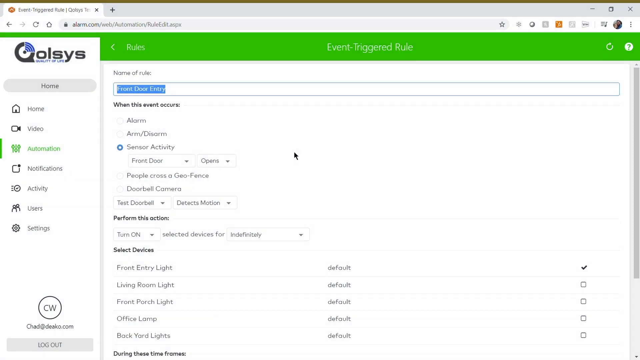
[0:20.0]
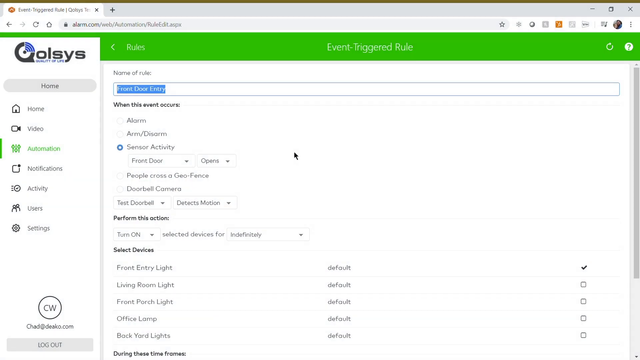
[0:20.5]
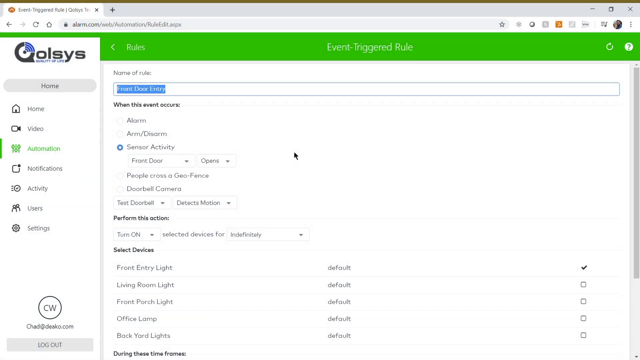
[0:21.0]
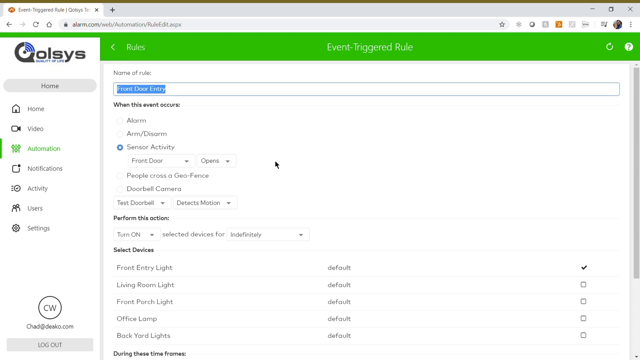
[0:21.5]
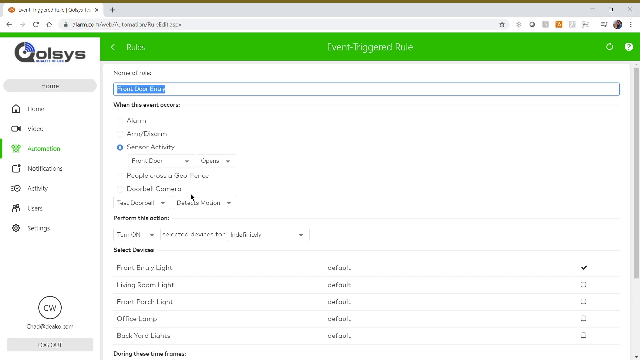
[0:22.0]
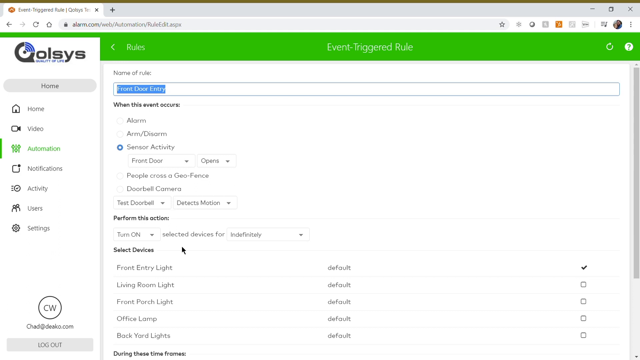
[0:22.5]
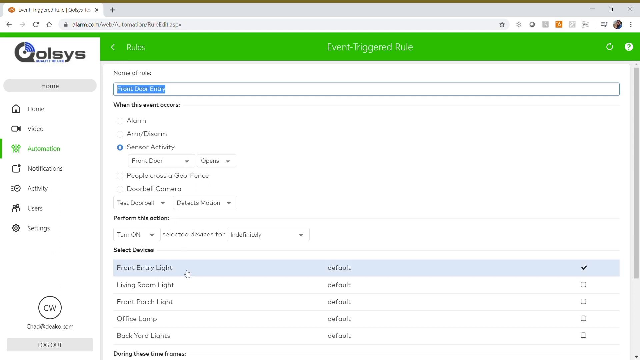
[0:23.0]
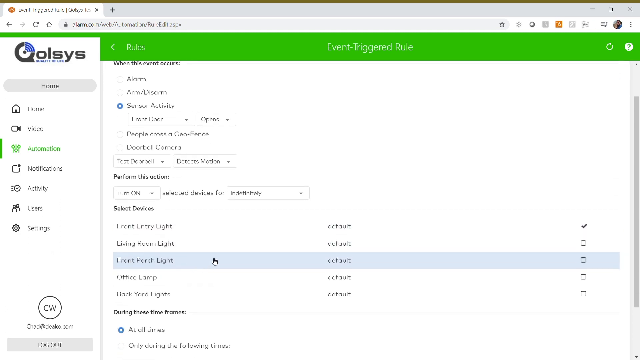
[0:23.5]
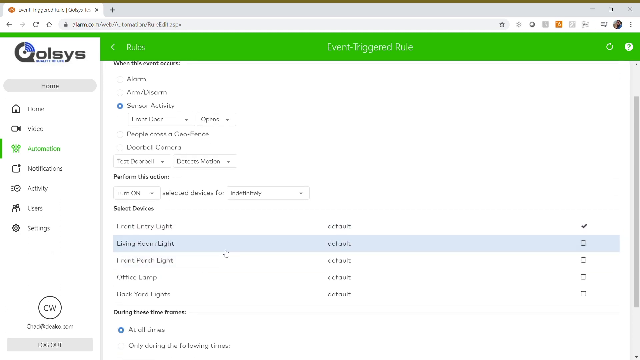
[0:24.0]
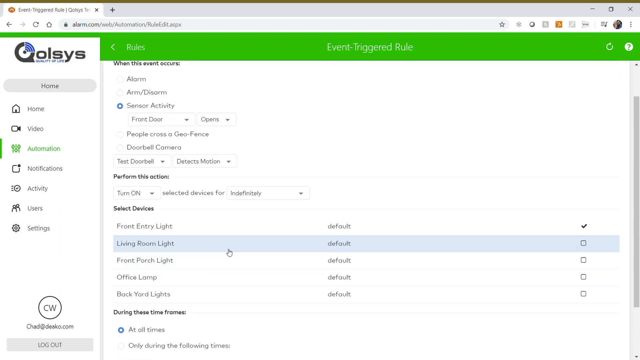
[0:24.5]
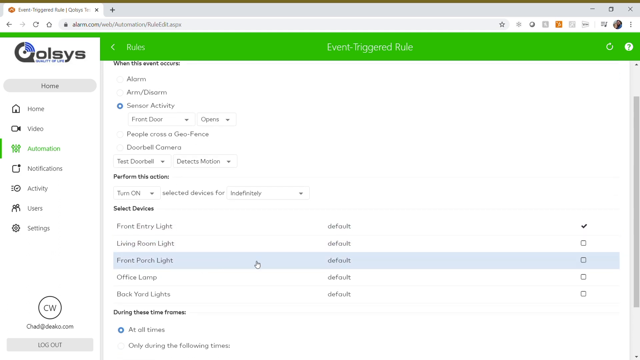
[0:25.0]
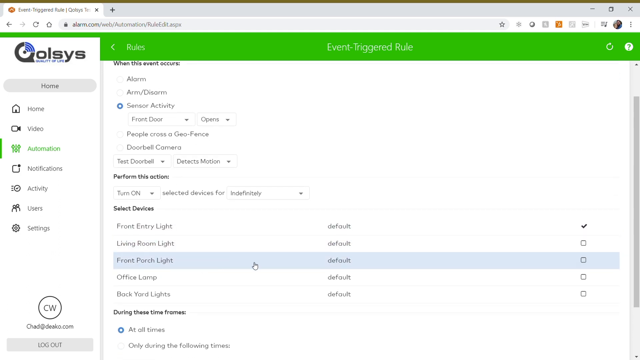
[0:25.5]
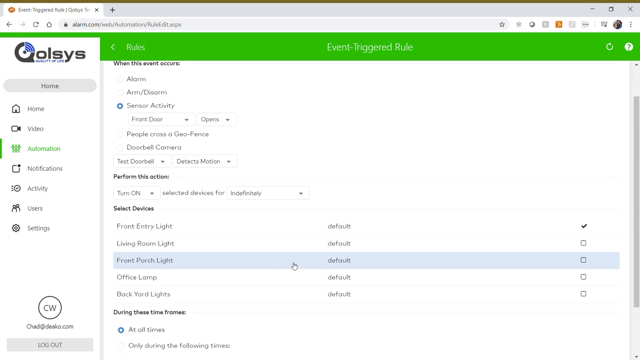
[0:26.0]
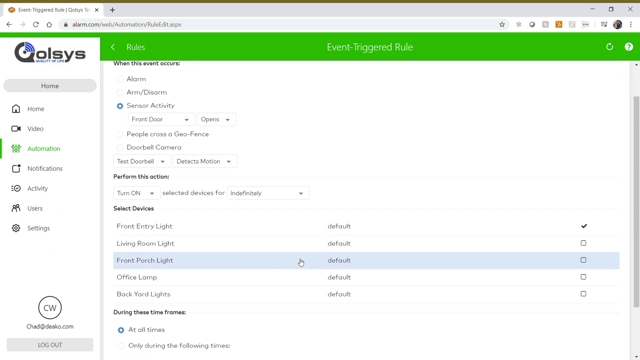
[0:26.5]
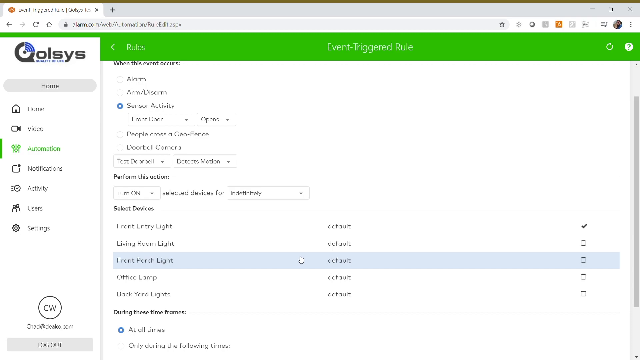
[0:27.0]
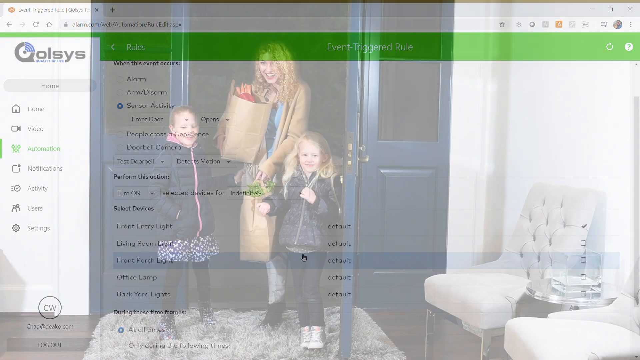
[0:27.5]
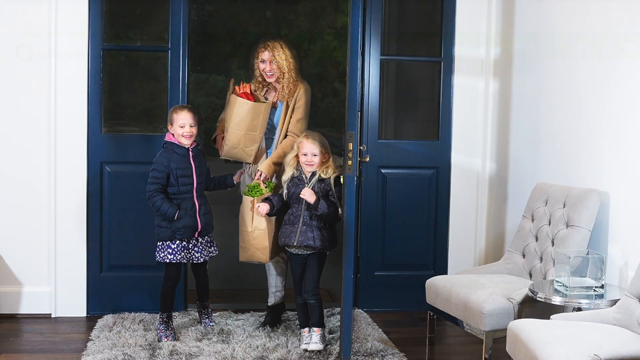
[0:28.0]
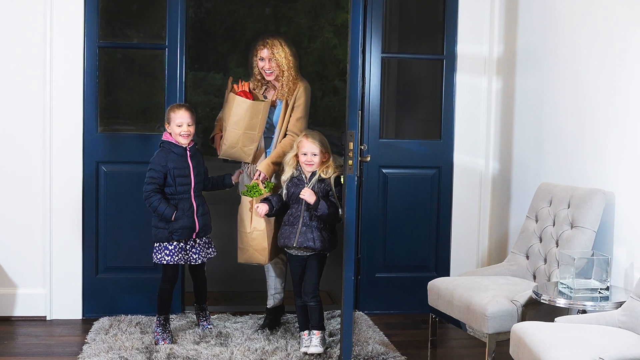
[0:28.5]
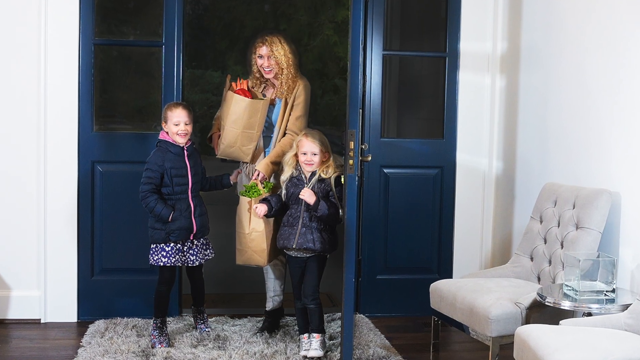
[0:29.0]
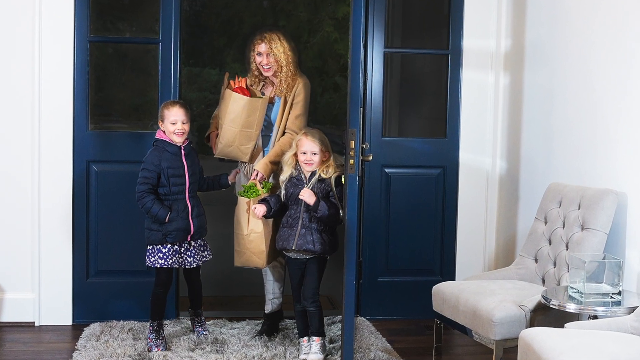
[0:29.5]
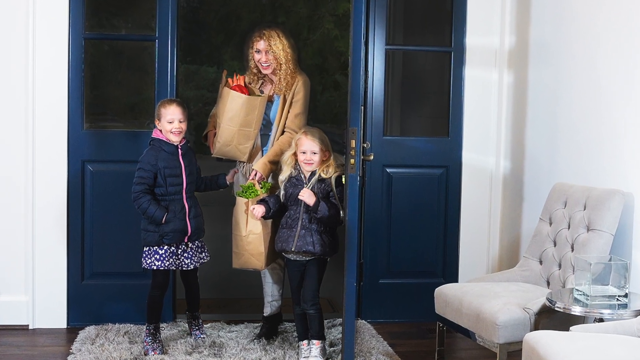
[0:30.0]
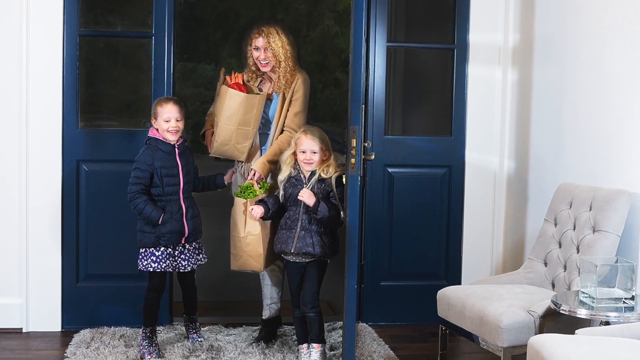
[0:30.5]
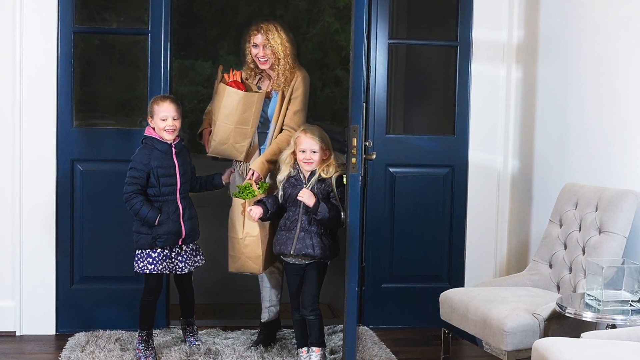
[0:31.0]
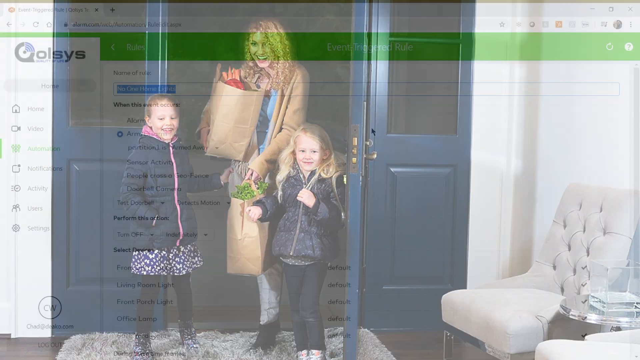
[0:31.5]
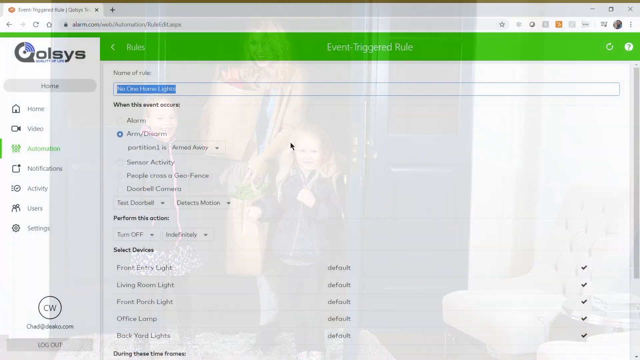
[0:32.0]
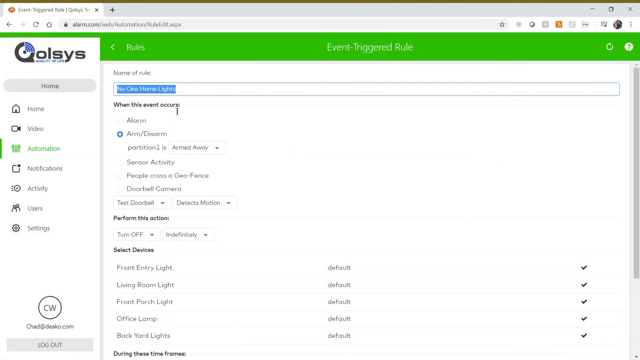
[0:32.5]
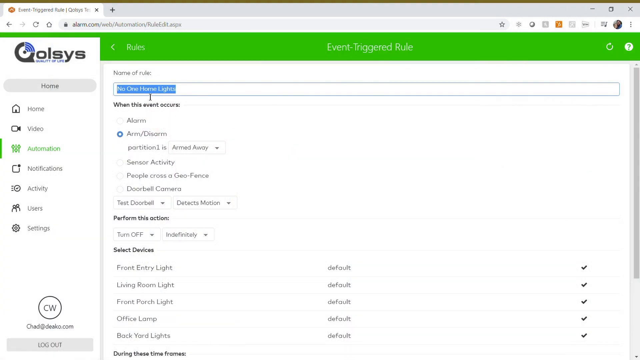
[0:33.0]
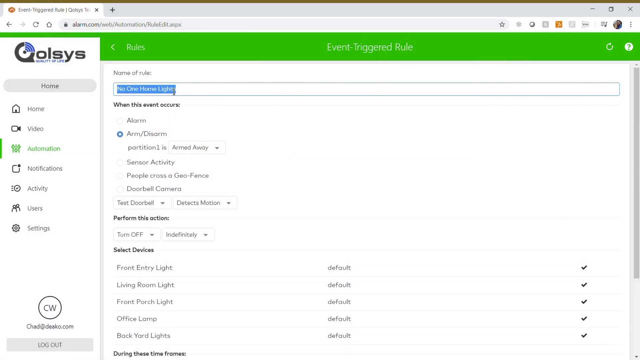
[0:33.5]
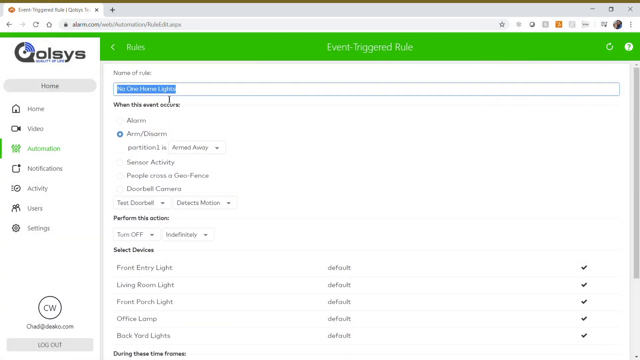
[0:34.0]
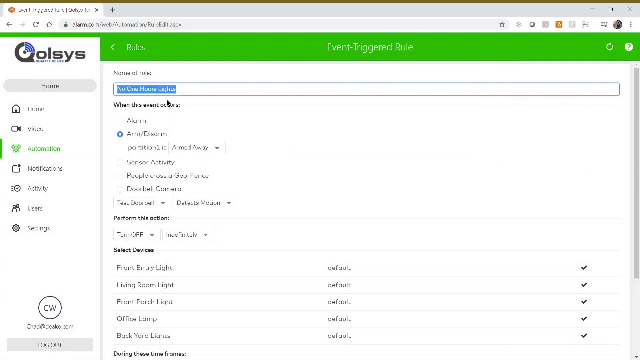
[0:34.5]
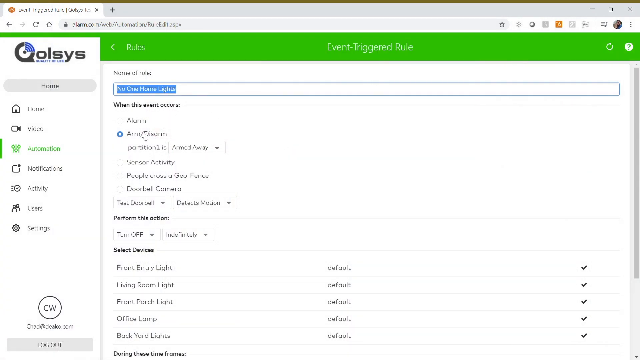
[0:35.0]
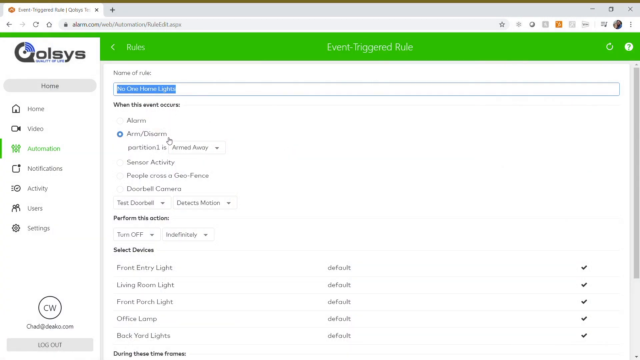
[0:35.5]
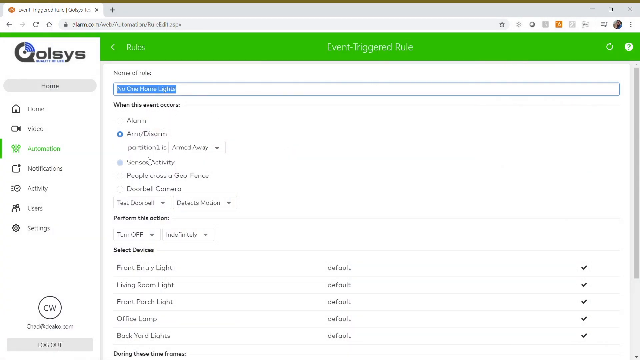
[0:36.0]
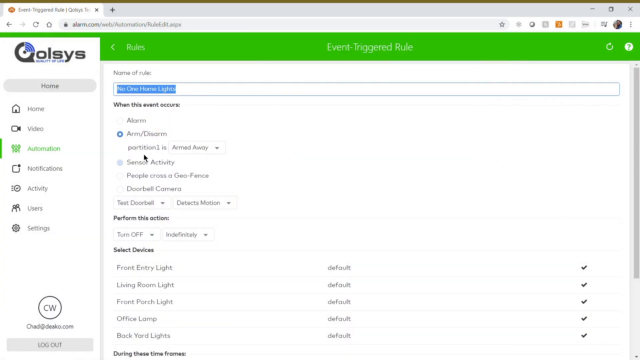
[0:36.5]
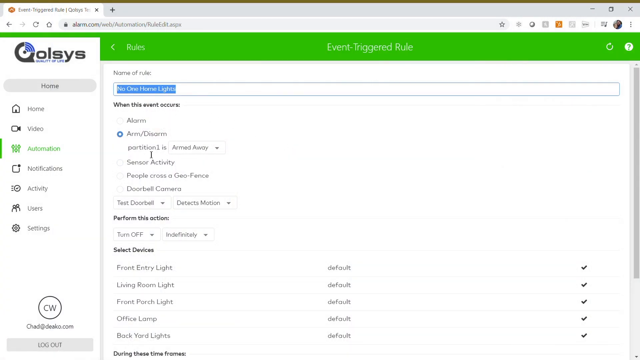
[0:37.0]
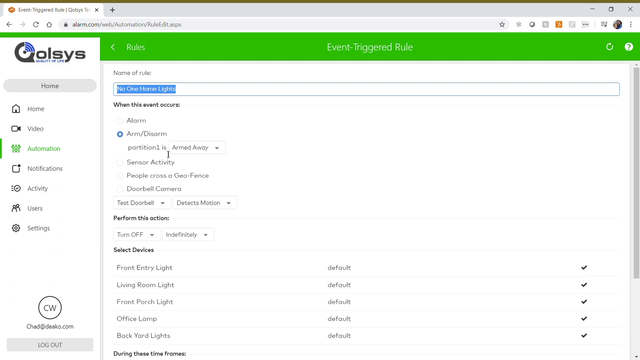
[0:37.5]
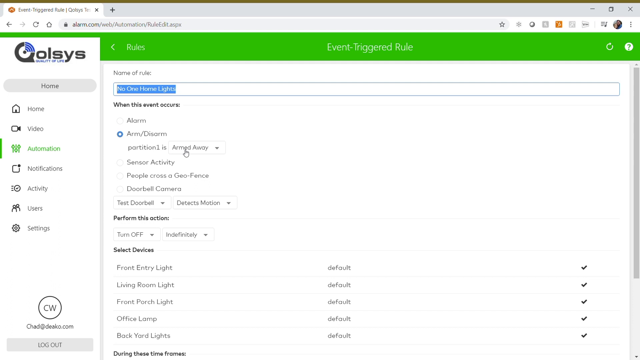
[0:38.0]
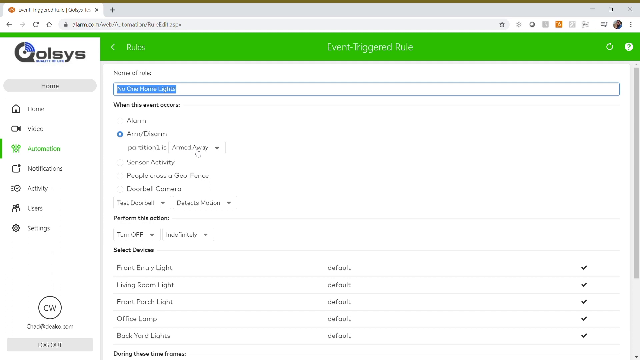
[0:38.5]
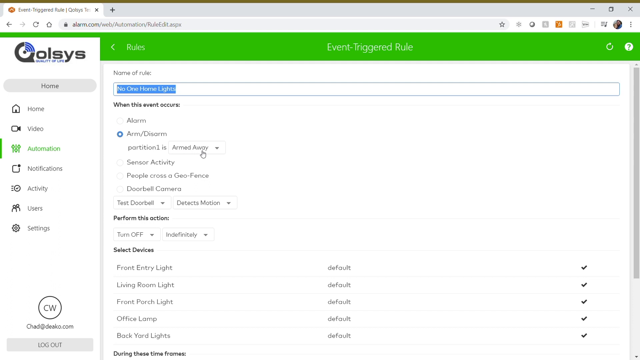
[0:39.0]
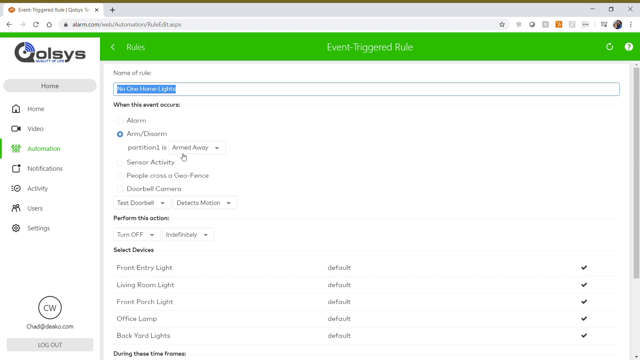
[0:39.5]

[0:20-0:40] The video is slightly wider than it is tall and shows someone's desktop, apparently in Google Chrome with only one tab open. It looks like a management interface. In the top left it says "QOLSYS", and below that is a navigation panel on the left, starting with a home button. Going down it lists "Home" with a house icon, "Video" with a camera icon, then "Automation", which is apparently the current page and is colored green instead of black like the rest. Next are "Notifications", with an icon that is kind of a square, "Activity", whose icon seems to be a circle, "Users", with a silhouette of two people, and "Settings", with a gear. At the top right of the main area it says "Event triggered rule" with a green banner behind it. Below that, on the left, it says "Name of rule", with a blank containing highlighted text that looks like "Front door entry". Below that is "When this event occurred", with settings going down. The user arrows down into the section that says "Select devices" and arrows over "Living room light", then "Front porch light". It then transitions to a different image showing a mom with two kids at an open blue front door, carrying in groceries.